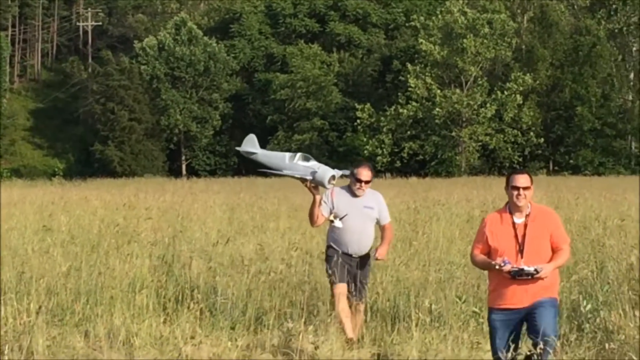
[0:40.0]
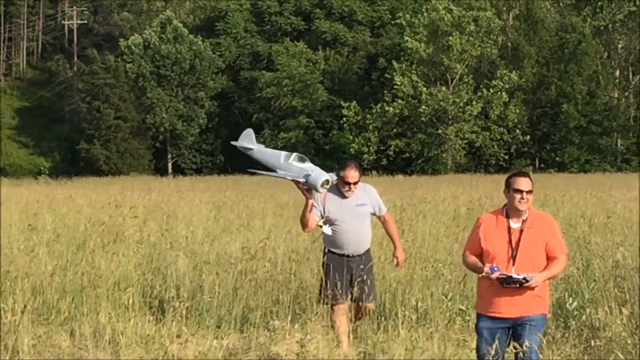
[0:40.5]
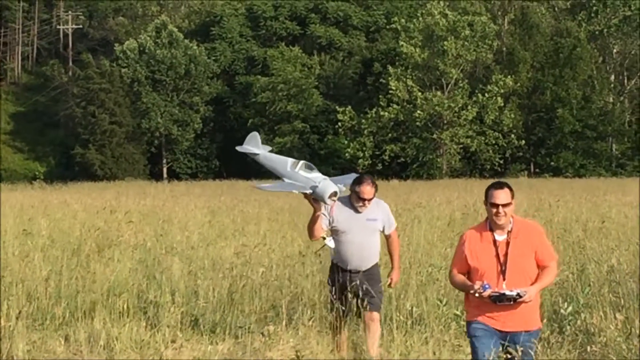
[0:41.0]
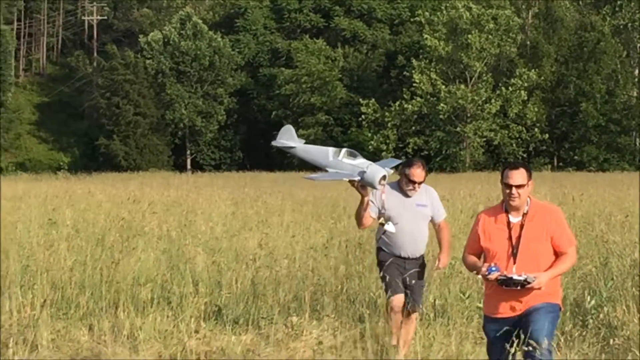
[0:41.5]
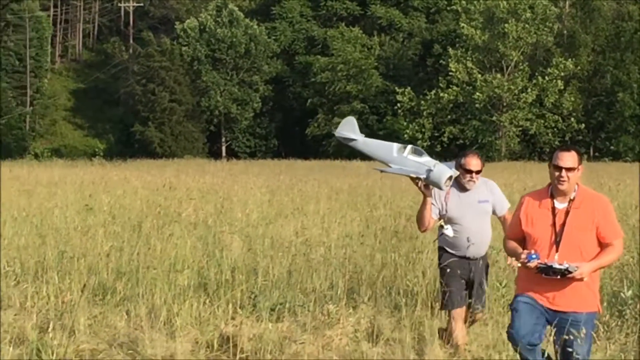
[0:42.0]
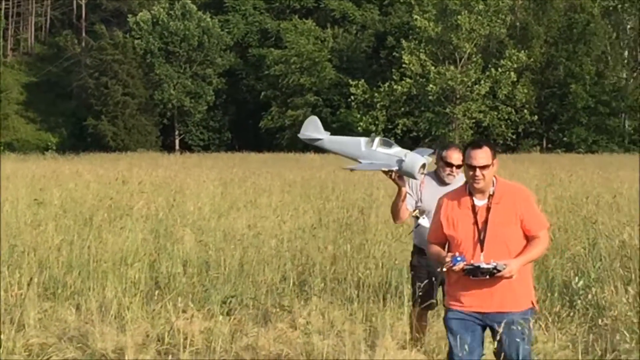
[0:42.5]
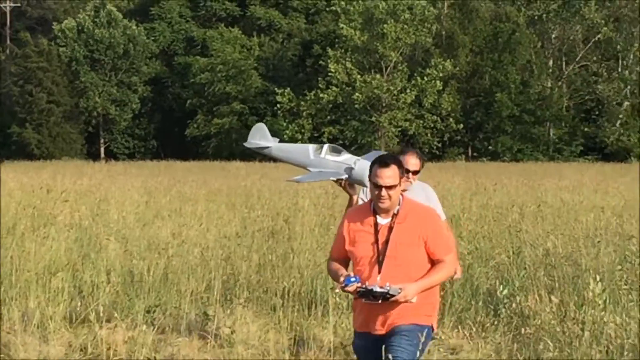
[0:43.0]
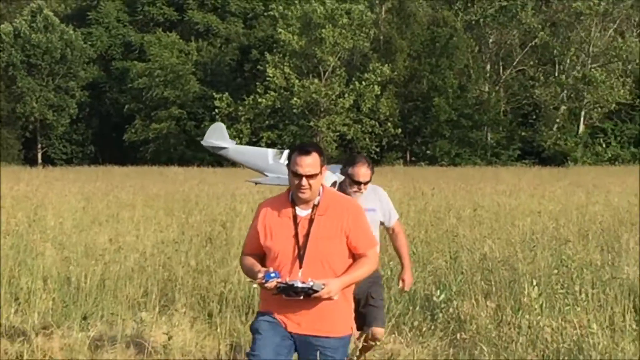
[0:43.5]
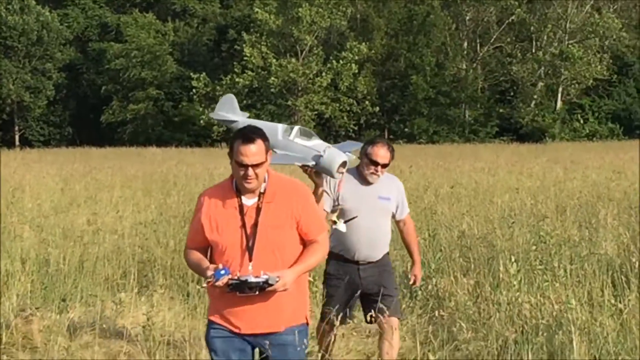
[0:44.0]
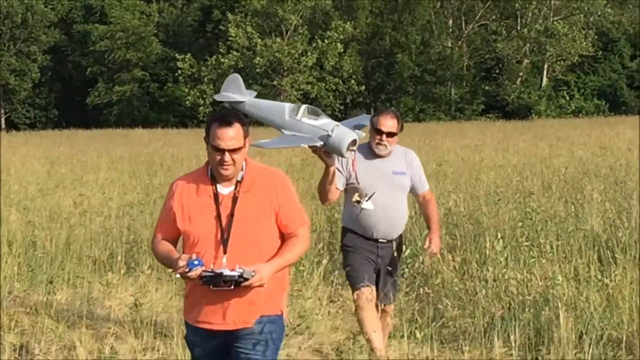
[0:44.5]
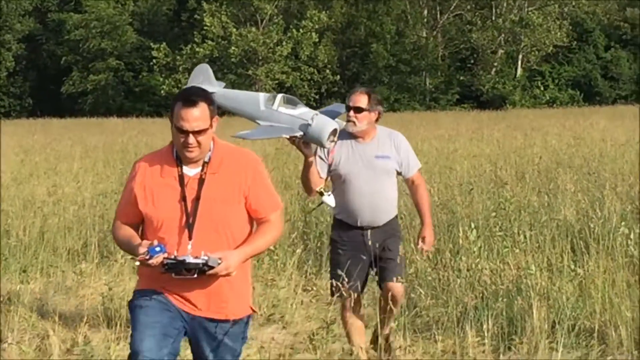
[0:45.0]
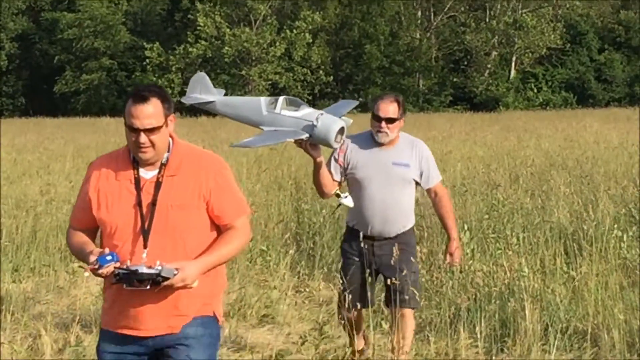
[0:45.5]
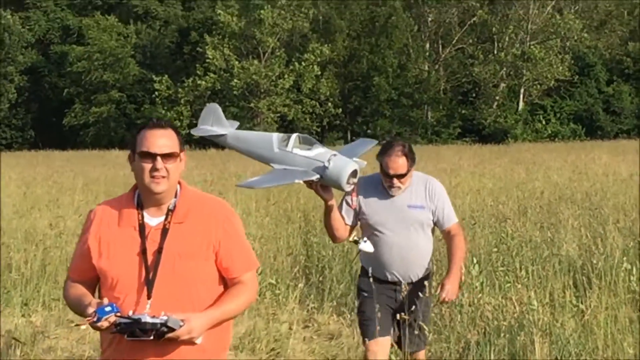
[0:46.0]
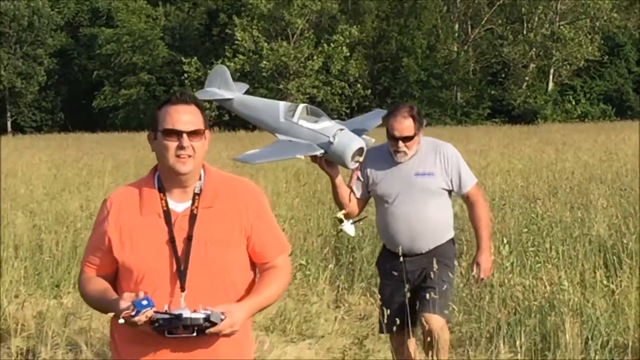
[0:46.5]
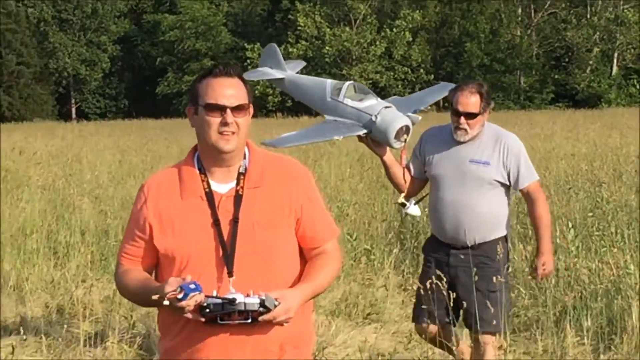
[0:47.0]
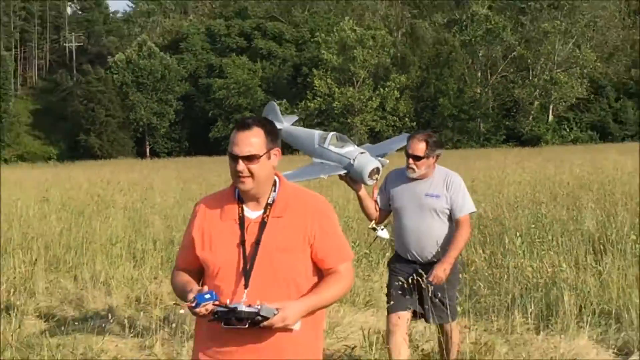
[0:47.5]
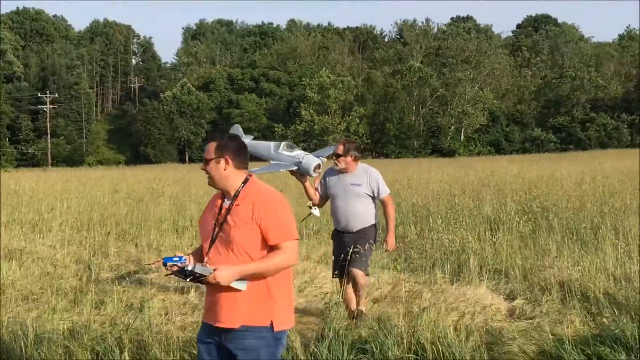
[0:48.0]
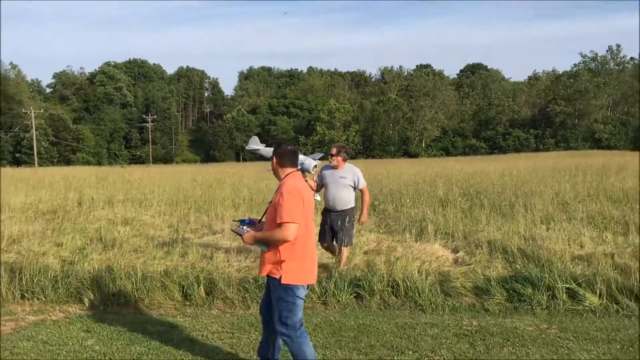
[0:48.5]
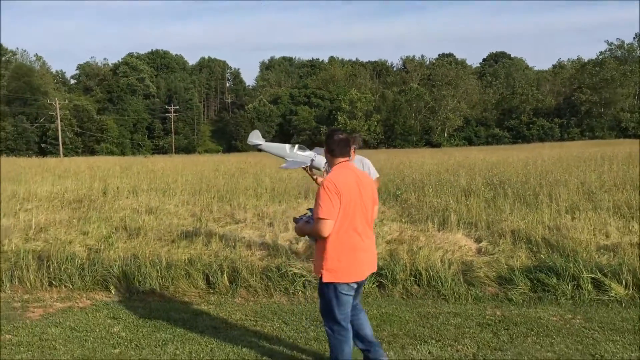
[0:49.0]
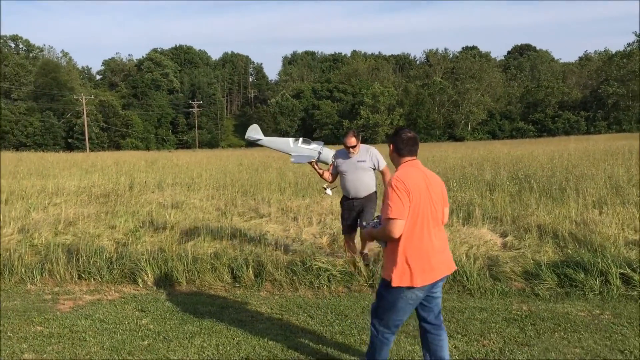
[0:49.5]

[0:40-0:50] The two men go out from the big grass onto the cut grass. The first man, holding a controller for the airplane, has dark short hair, eyeglasses, a pink t-shirt and blue jeans. The second man, holding the grey airplane in his hands, has medium-length brown hair, eyeglasses, a white beard, a grey t-shirt and short pants. They head to the main place where the airplane was first thrown.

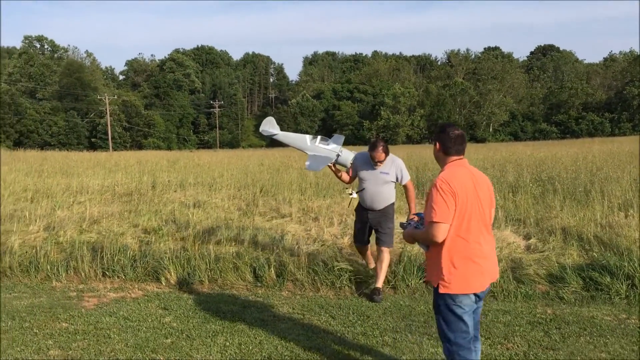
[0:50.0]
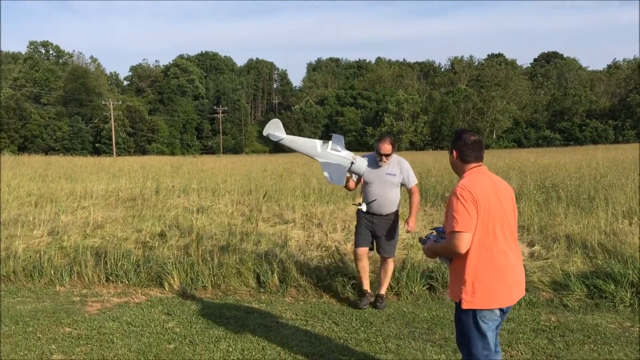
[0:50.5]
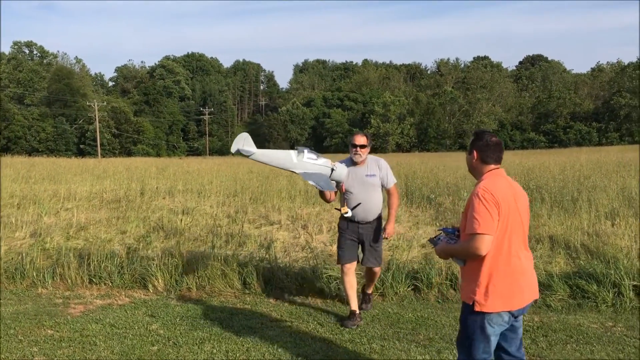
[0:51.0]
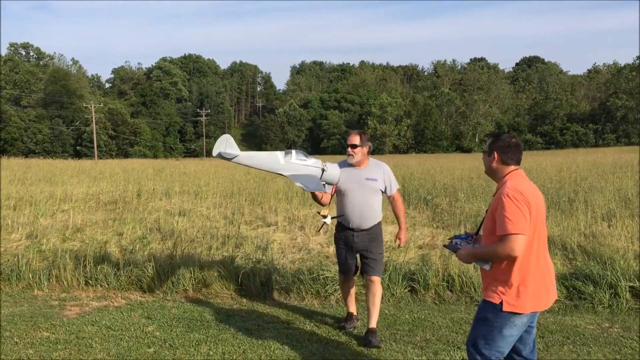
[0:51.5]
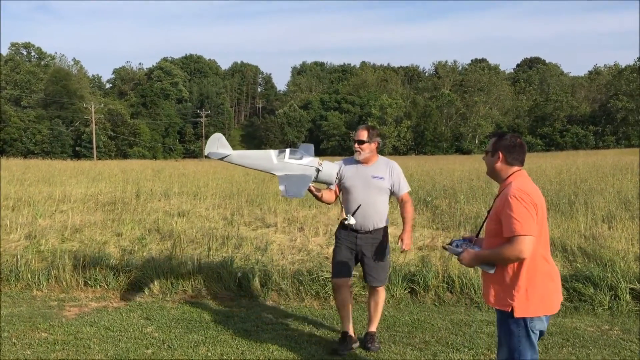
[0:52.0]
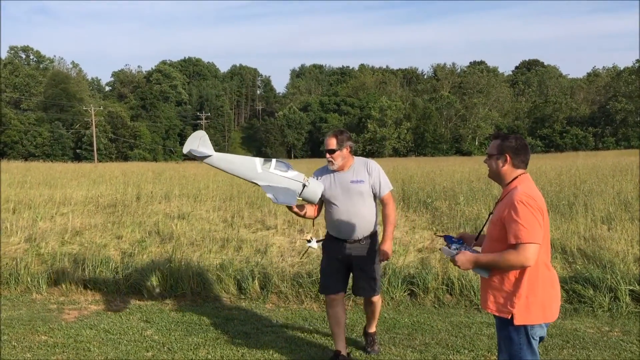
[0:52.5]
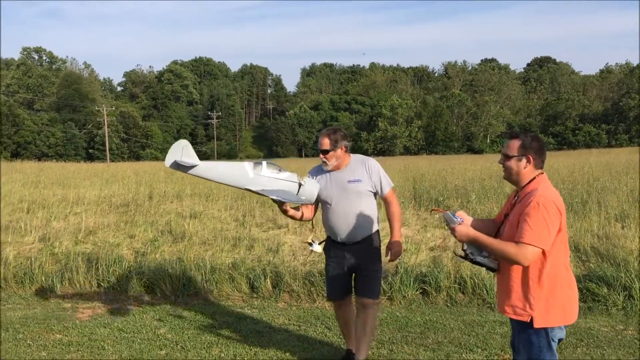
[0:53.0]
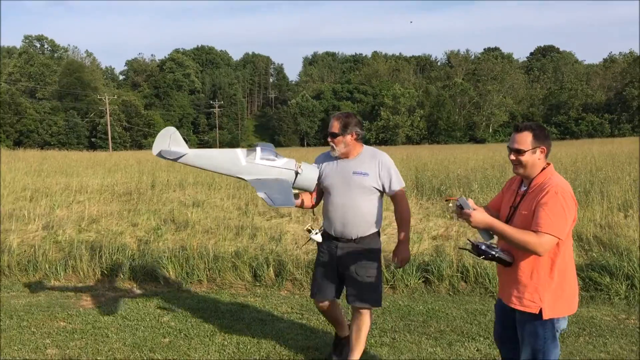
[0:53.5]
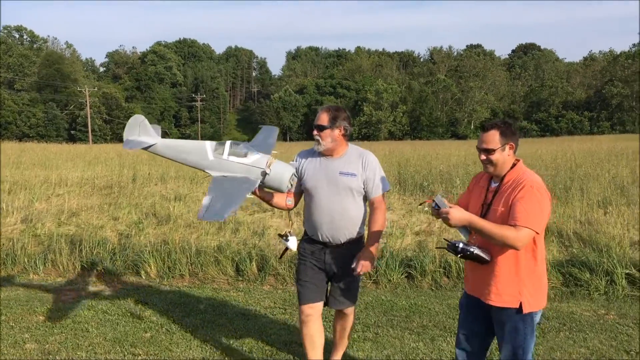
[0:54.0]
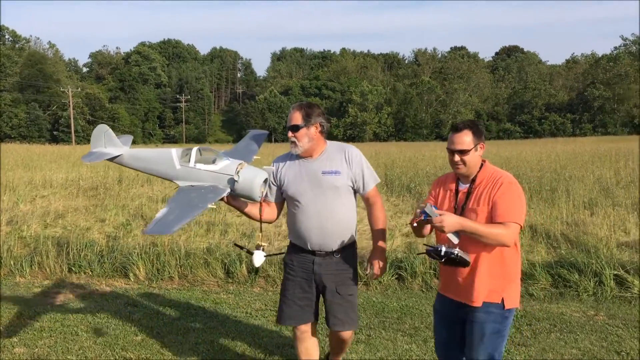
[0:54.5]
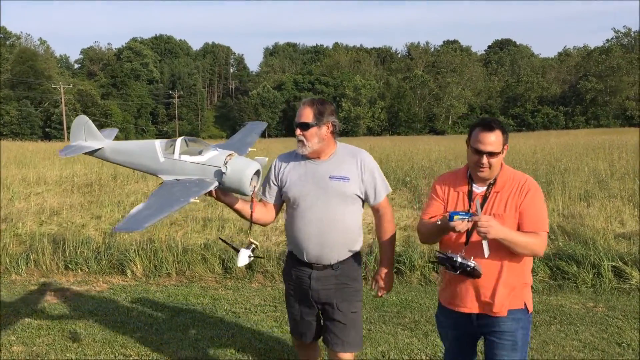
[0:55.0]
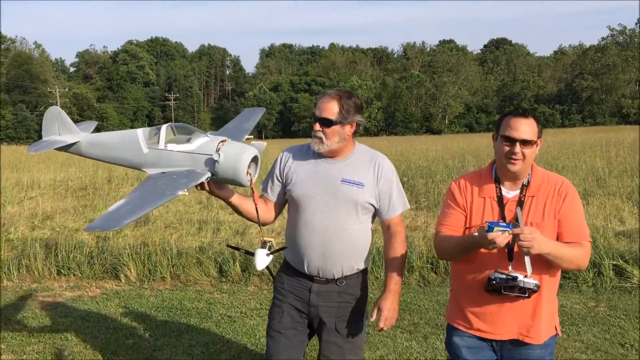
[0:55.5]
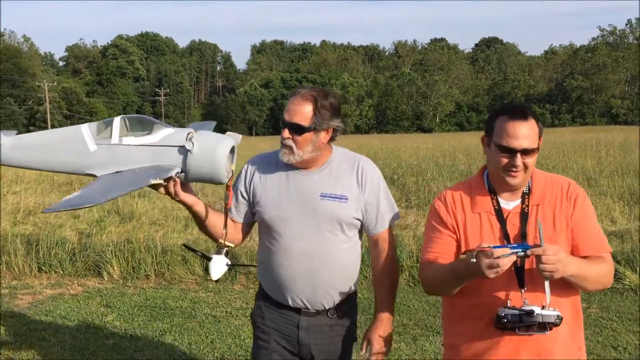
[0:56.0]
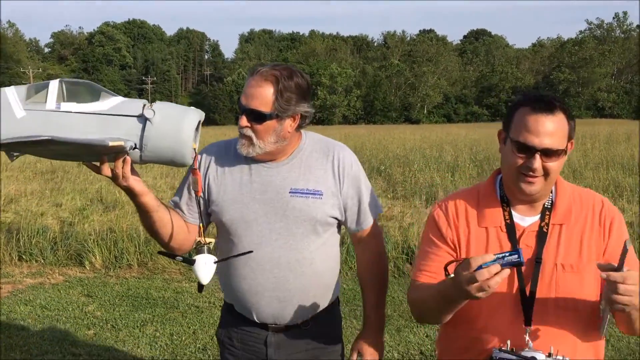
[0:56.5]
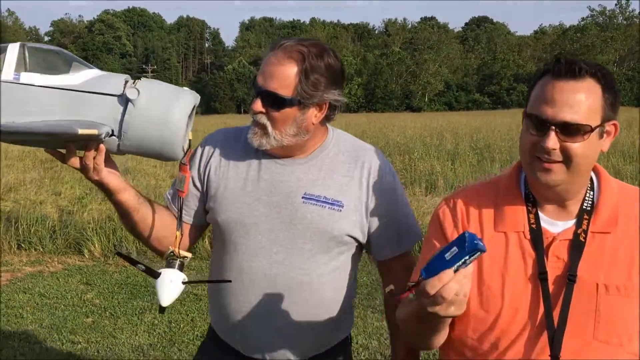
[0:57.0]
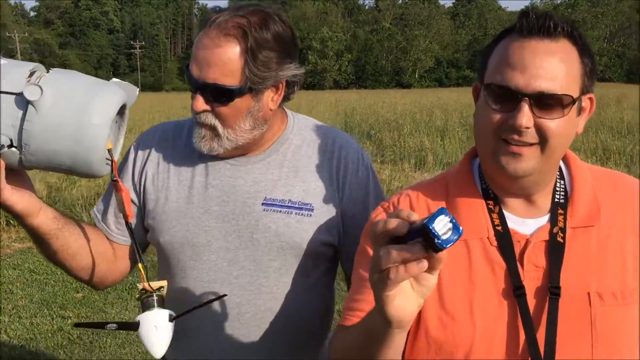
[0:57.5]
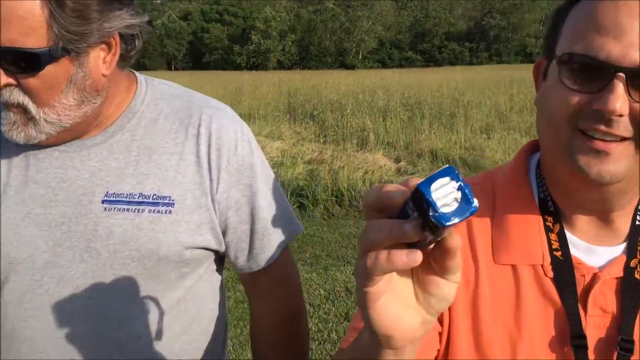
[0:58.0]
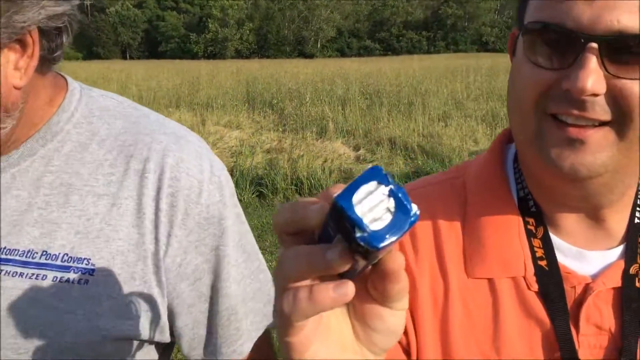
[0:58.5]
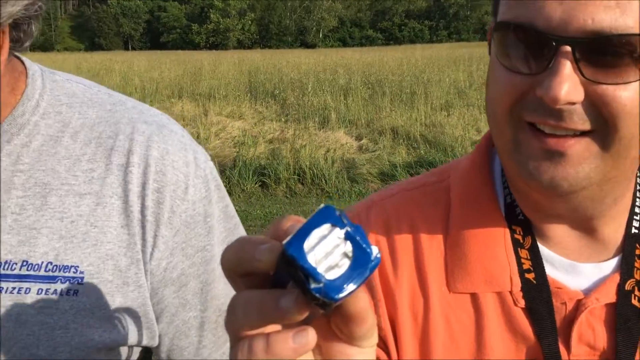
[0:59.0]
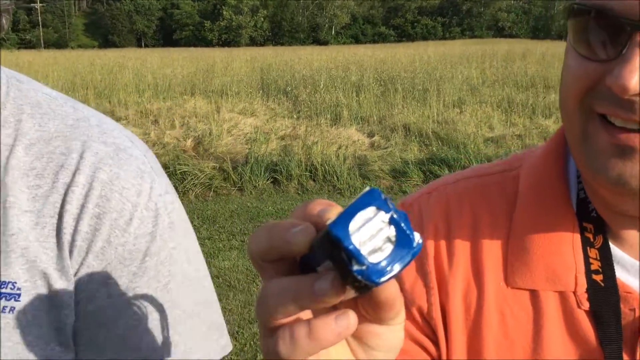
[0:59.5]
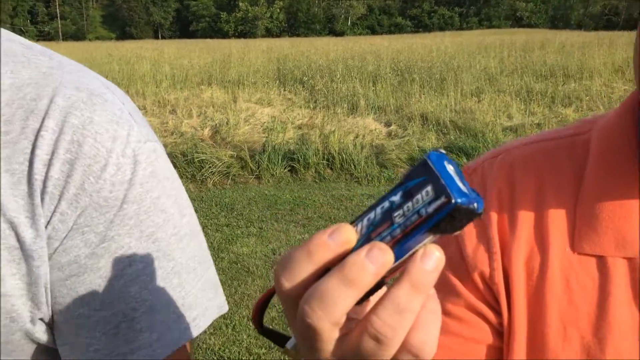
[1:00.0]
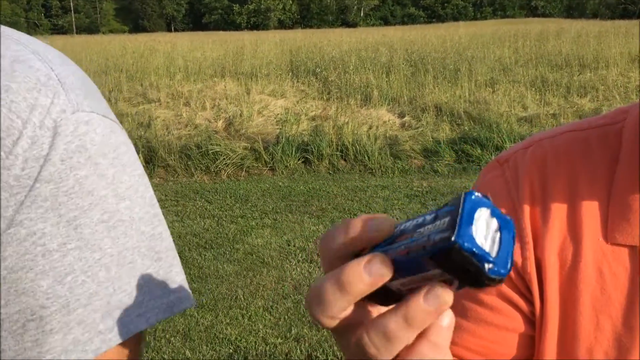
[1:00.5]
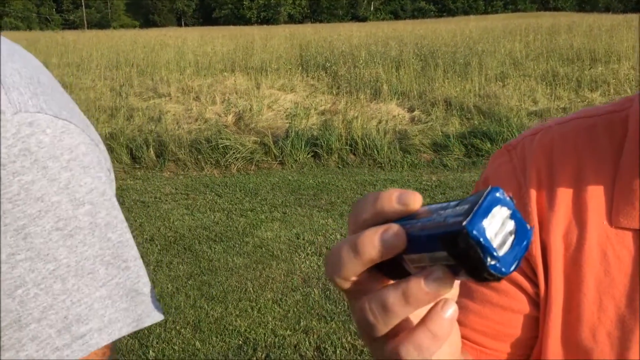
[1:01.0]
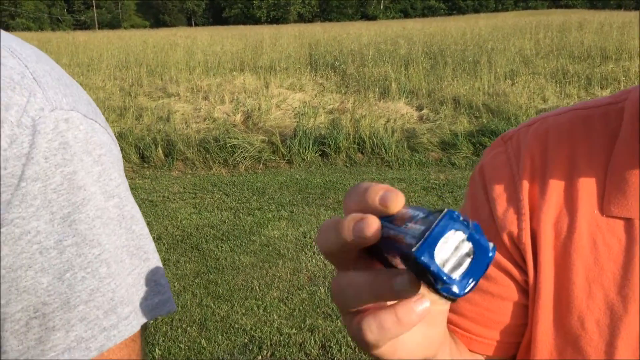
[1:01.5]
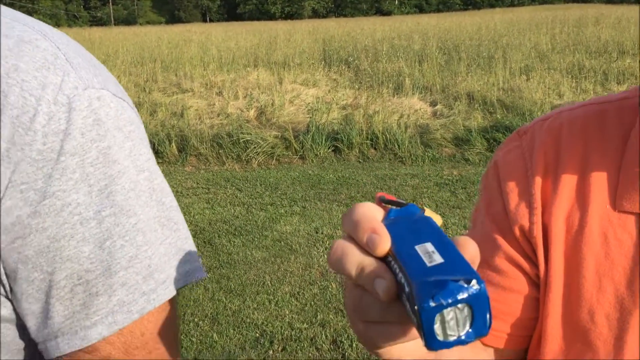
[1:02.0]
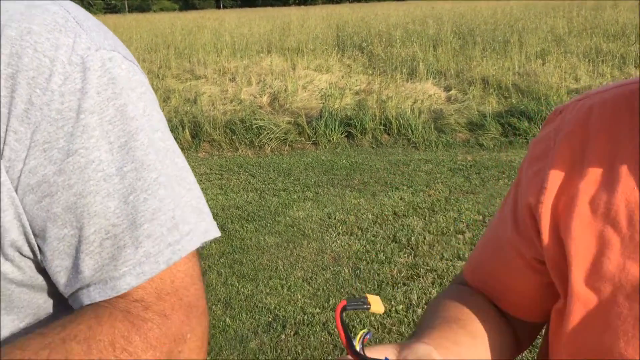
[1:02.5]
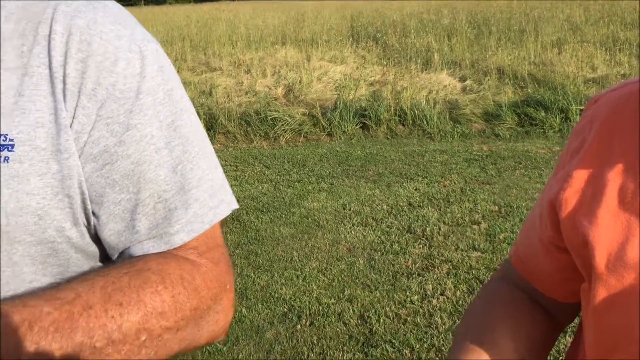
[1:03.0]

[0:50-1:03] The man in the grey t-shirt and short pants shows the airplane to the camera after the crash. The front of the airplane is a little bit crashed, and the airplane apparently did not start again.